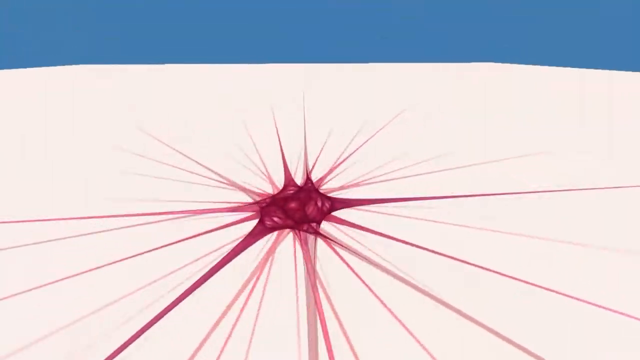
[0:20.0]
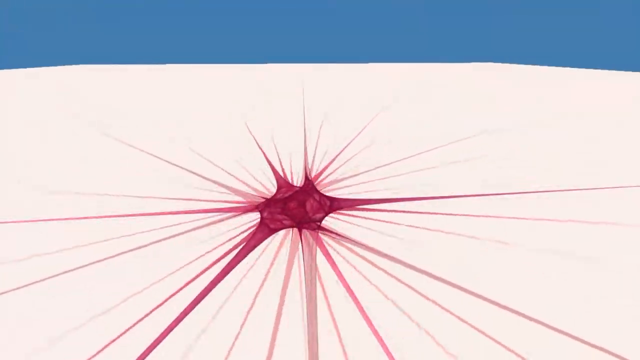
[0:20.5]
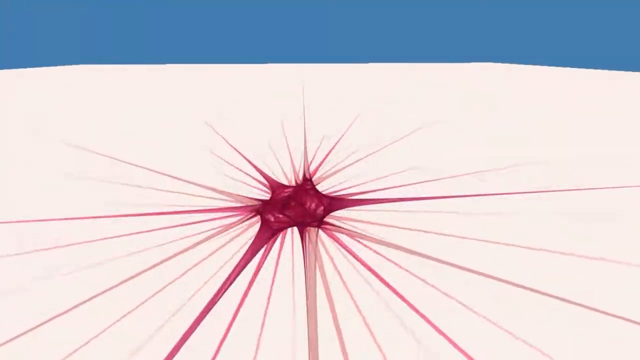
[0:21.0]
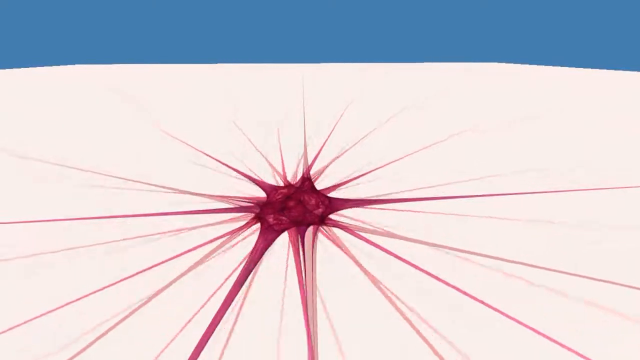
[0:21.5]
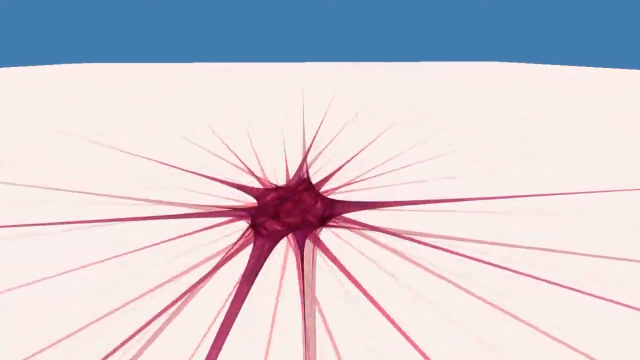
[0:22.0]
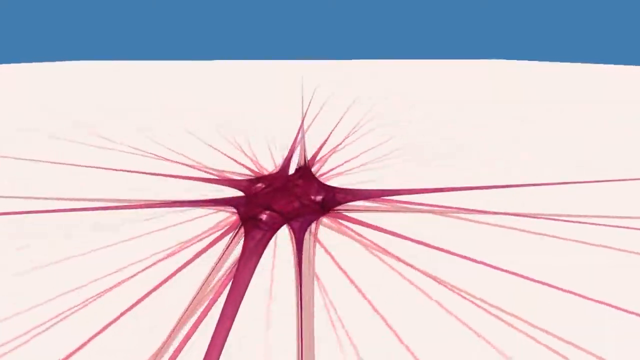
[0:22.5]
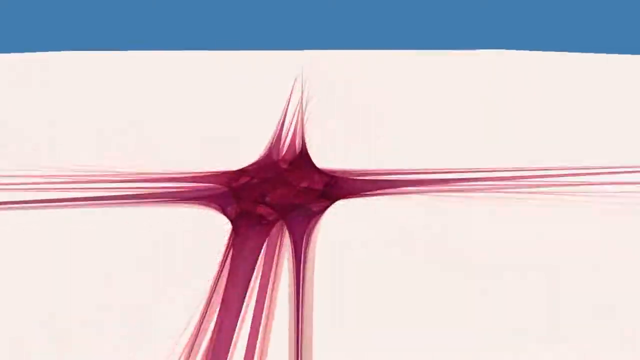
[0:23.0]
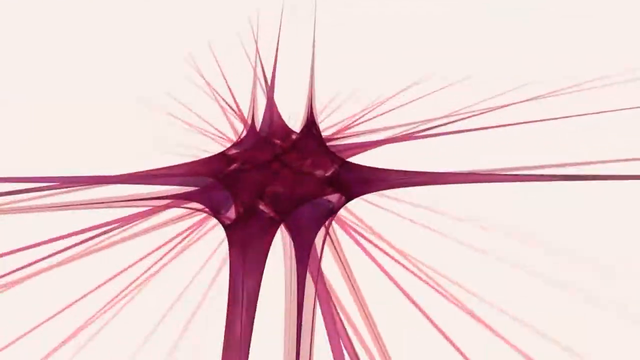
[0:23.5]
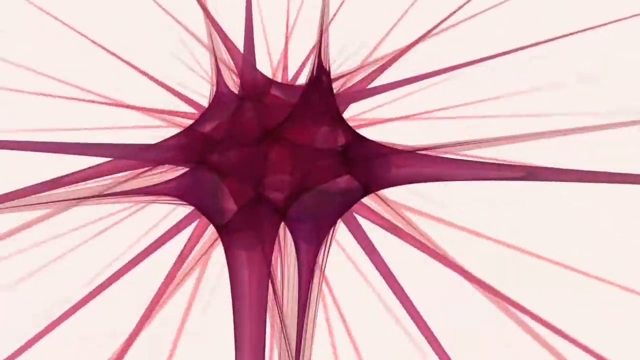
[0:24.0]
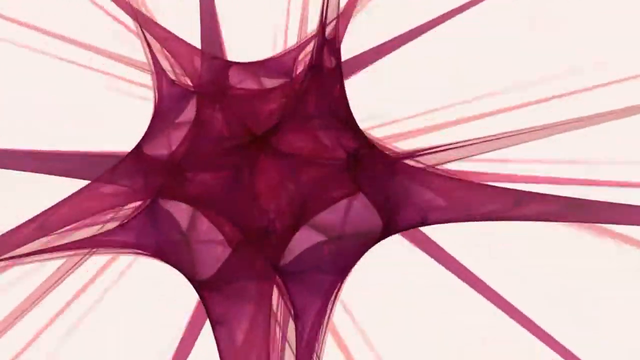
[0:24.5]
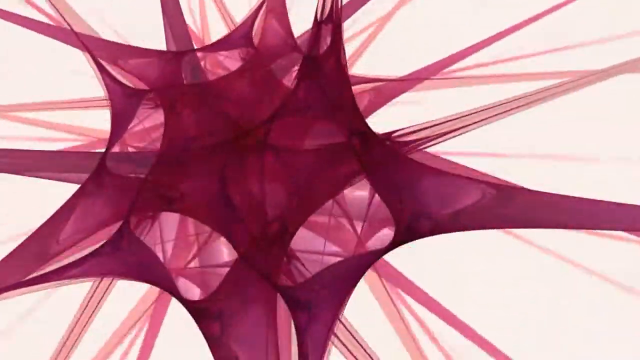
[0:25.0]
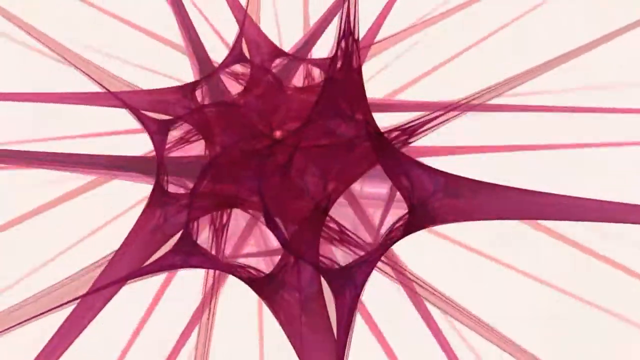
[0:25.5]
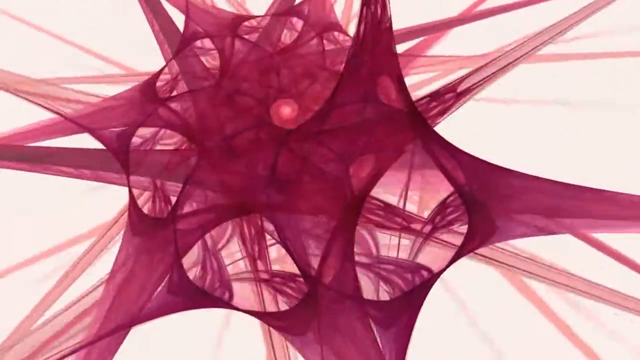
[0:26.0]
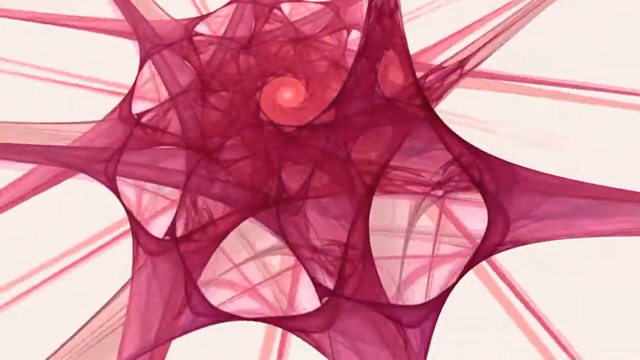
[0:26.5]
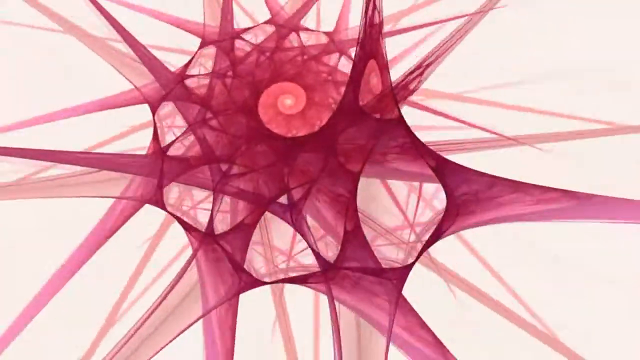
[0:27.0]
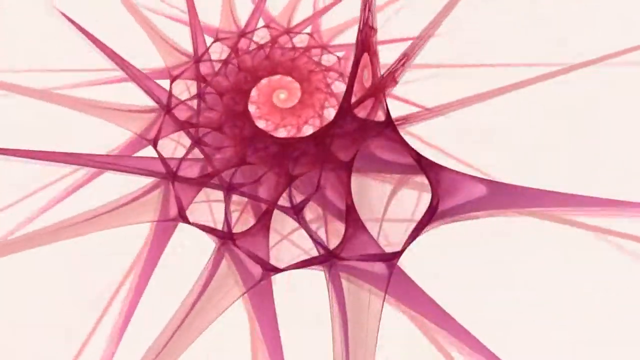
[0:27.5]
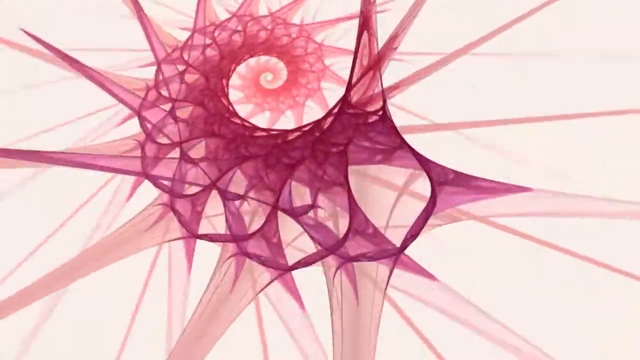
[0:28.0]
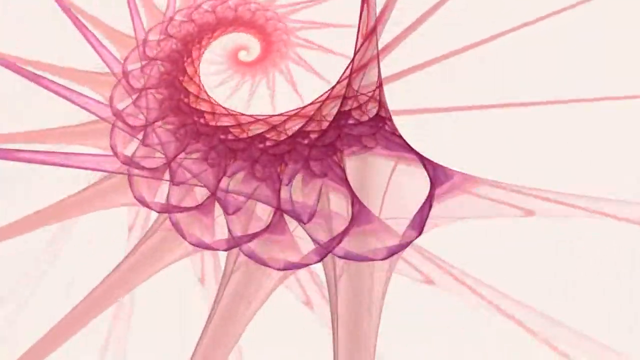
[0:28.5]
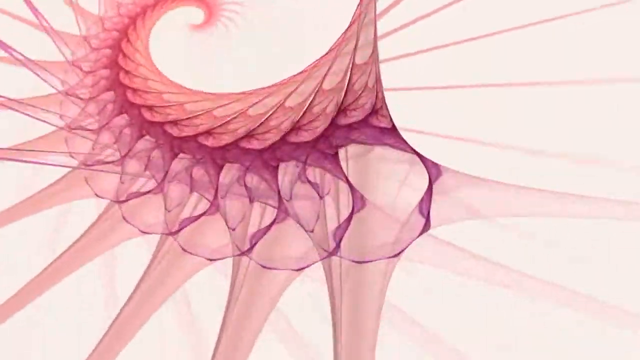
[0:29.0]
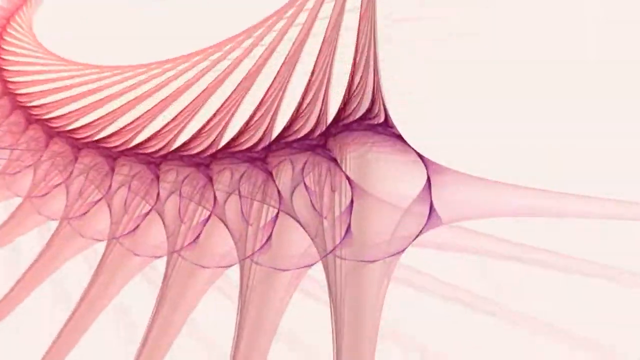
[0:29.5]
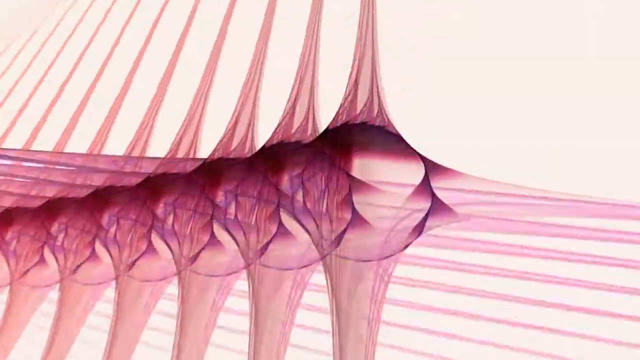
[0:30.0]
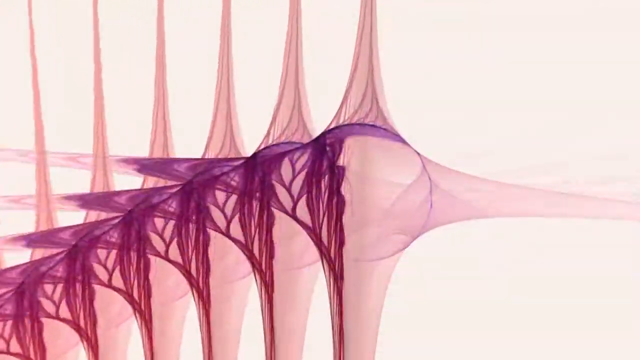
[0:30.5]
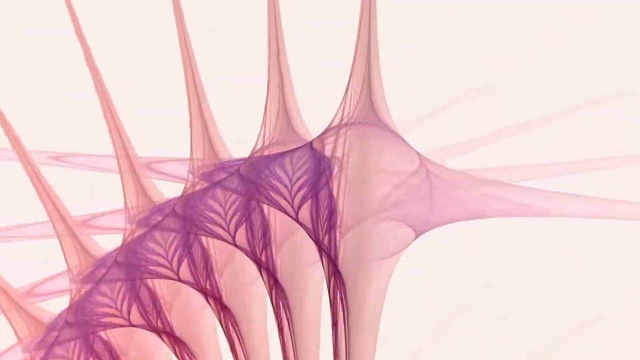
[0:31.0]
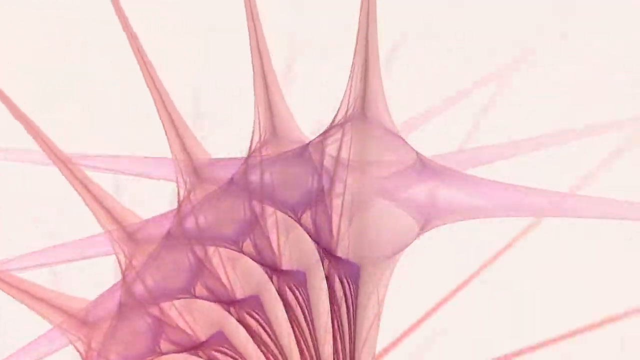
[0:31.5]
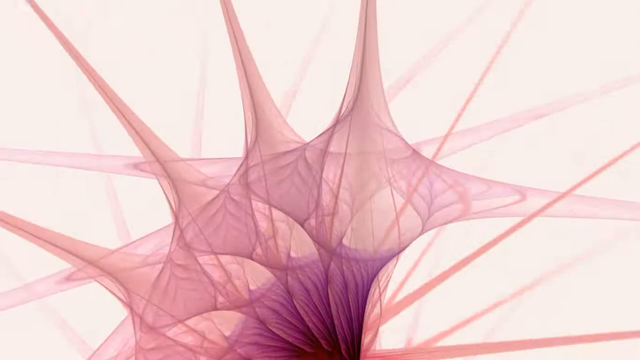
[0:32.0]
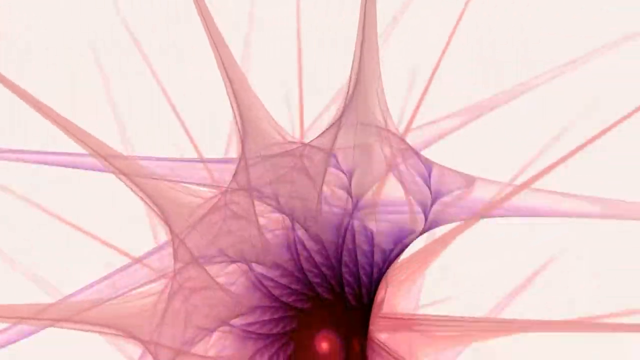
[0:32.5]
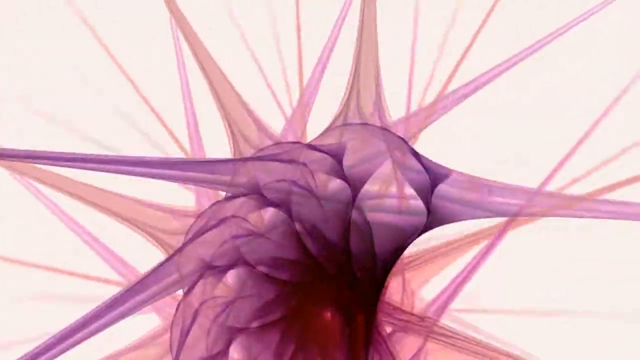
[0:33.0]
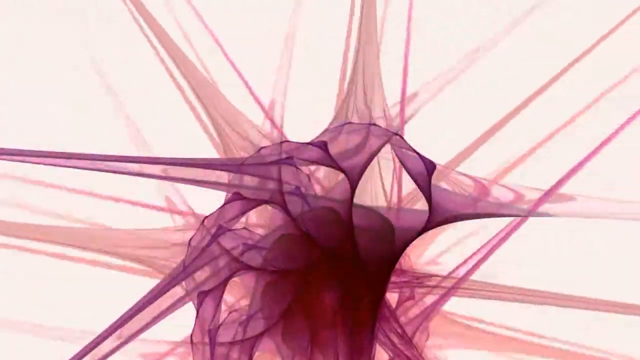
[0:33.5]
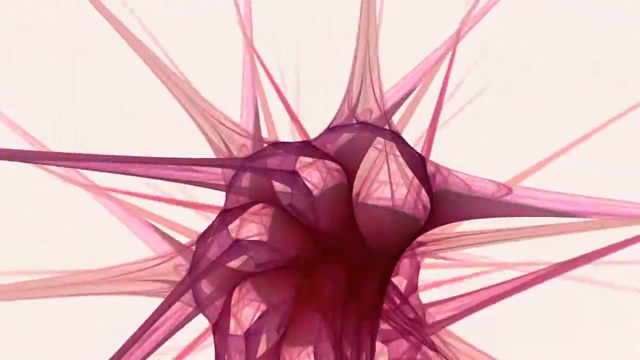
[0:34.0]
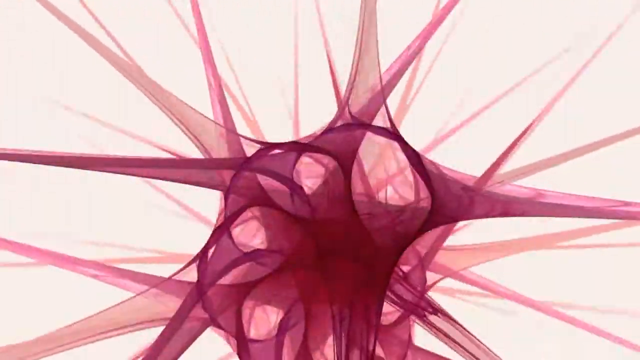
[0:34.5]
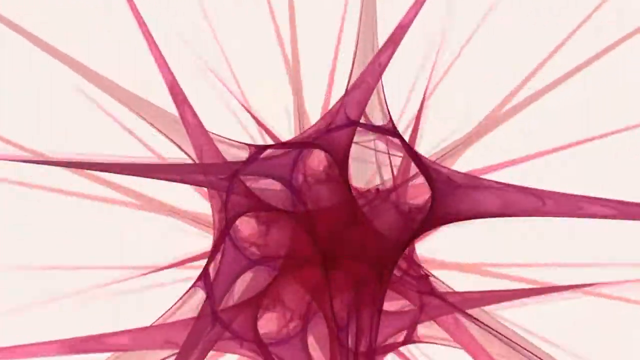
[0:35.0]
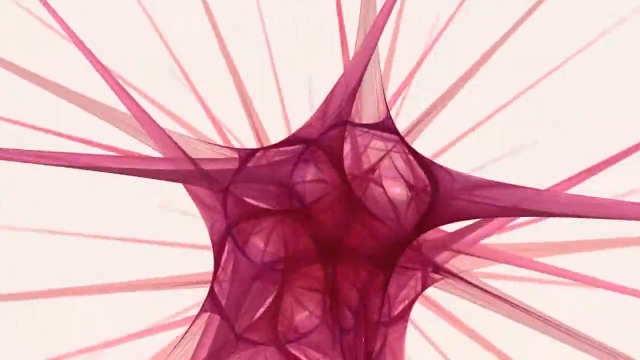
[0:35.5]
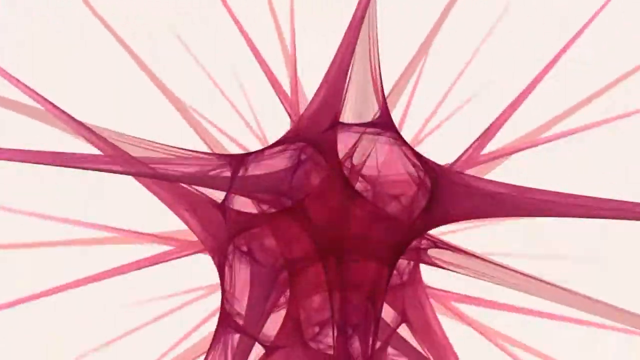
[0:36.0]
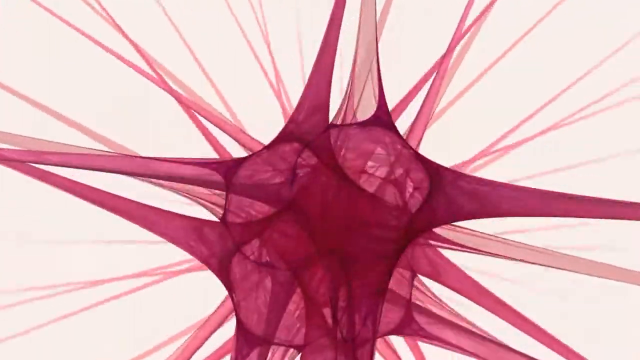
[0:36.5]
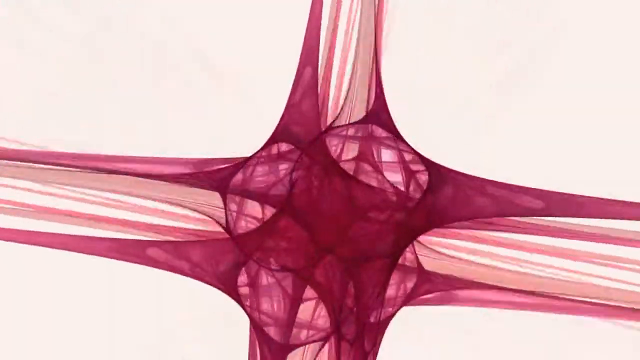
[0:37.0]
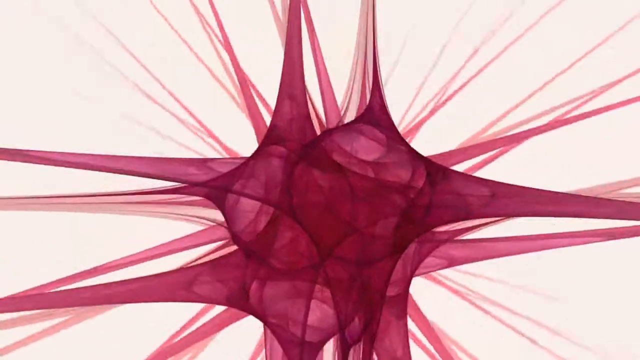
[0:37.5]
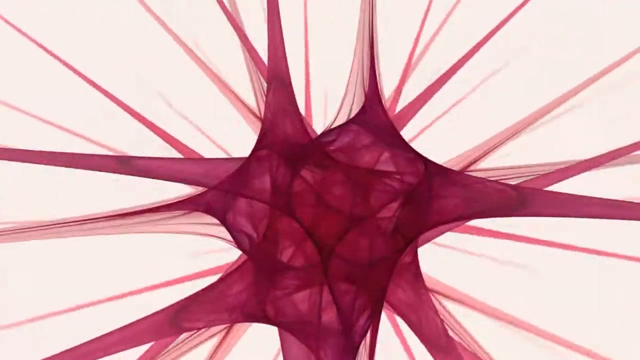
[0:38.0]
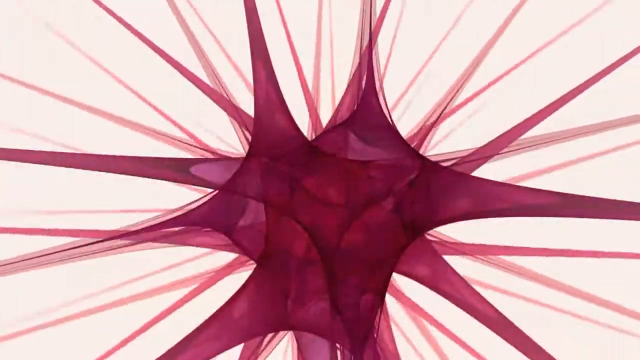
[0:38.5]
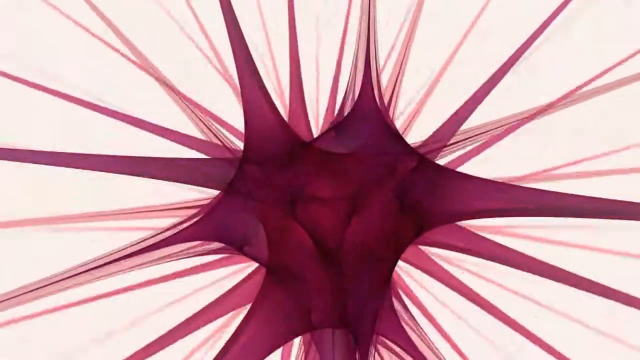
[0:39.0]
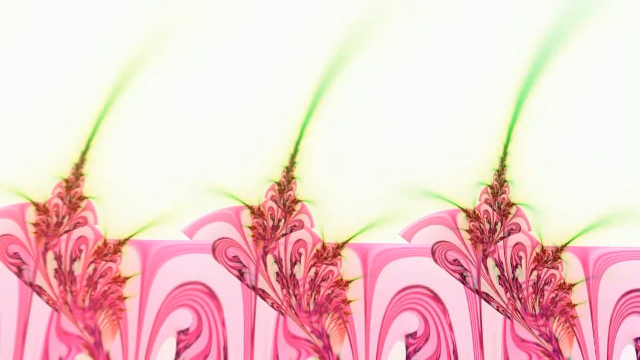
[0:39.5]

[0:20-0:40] The kaleidoscope continues, starting with a blue header on top. The maroon design with four points swirls from left to right, multiplying into different ones as it swirls. The view zooms back deep into the center of the design, revealing even more detail. Different images form as it swirls, including what looks like a shell-type image, with lots of swirls and geographic designs inside the image as it turns around. More detailed images are created within the center part. The colours then change to more of a mauve and a darker purple, then back to maroon. Toward the end it changes to a different image that looks like different paisleys, maybe of swirls, with greens bursting out the top. The swirls shoot up from the top and to the left and right, and there appear to be almost tiles toward the bottom of the image, still in a kaleidoscope style.